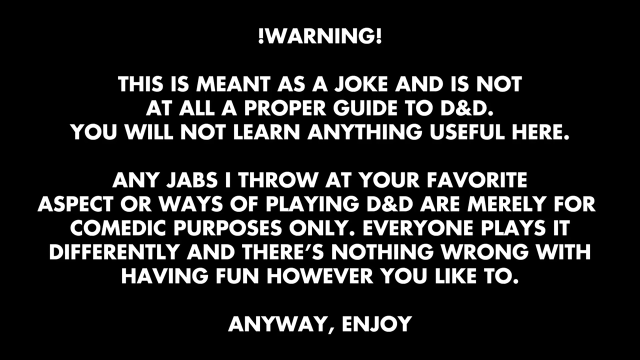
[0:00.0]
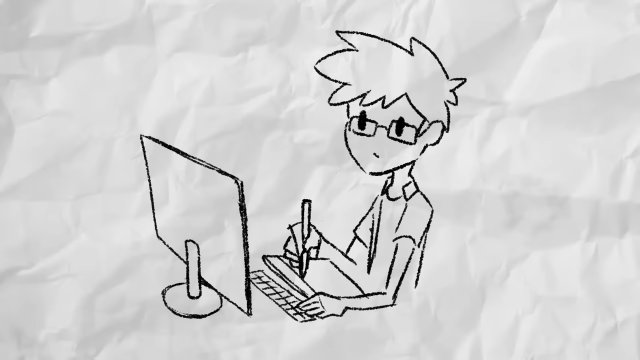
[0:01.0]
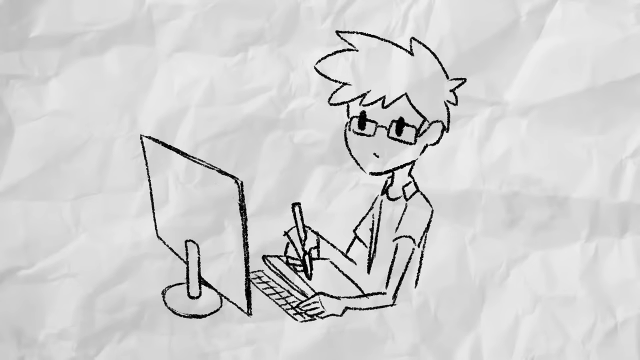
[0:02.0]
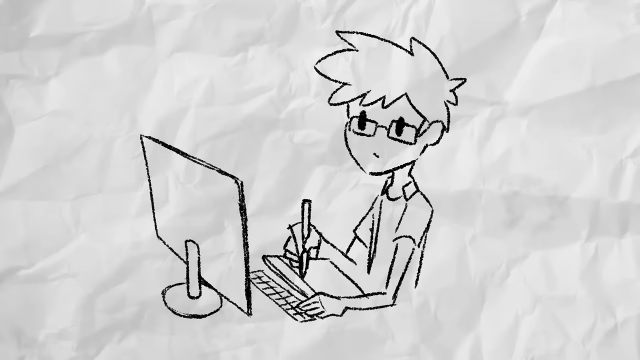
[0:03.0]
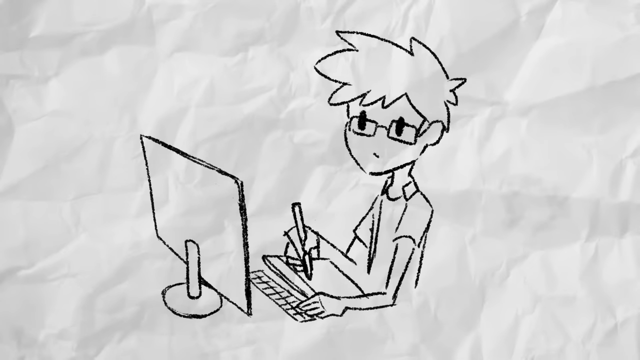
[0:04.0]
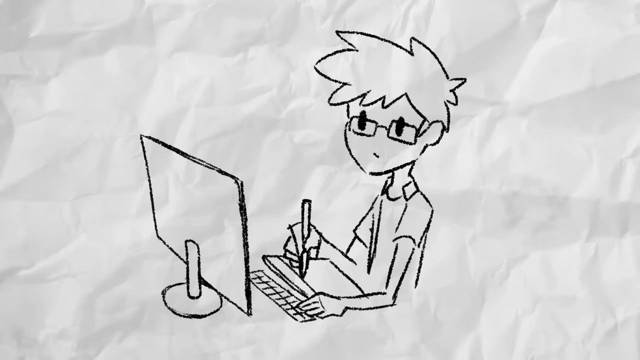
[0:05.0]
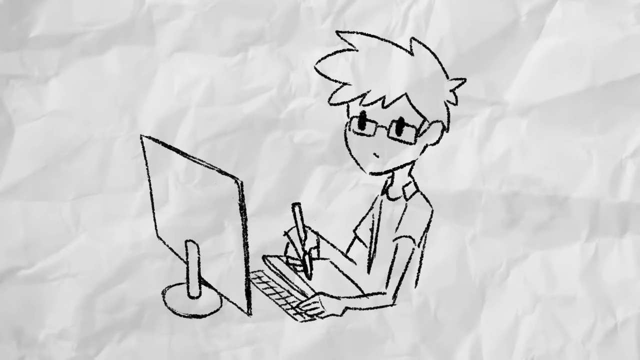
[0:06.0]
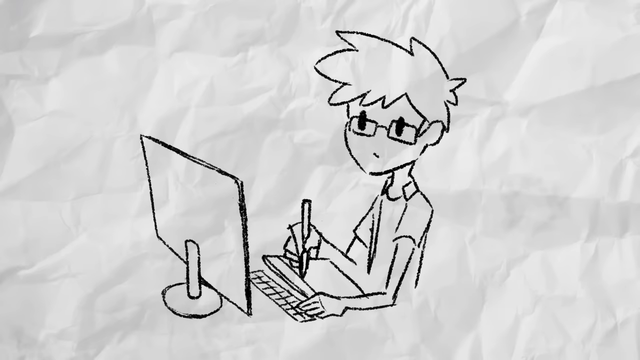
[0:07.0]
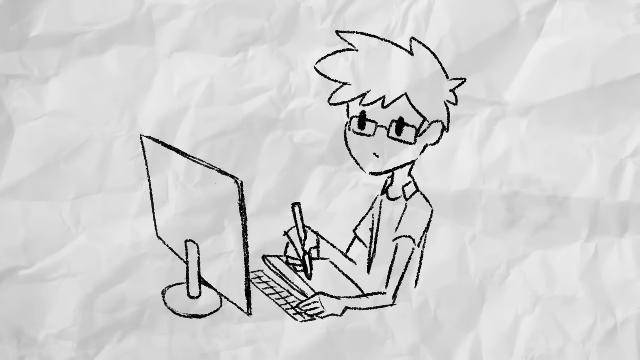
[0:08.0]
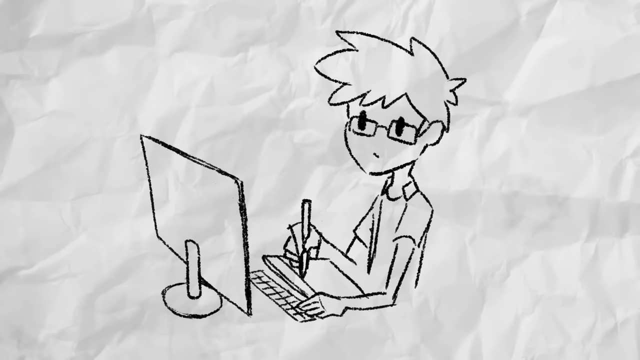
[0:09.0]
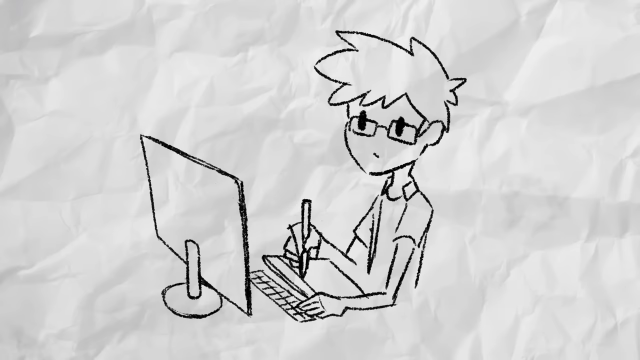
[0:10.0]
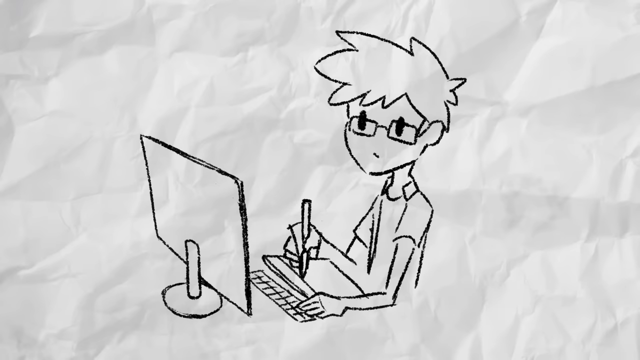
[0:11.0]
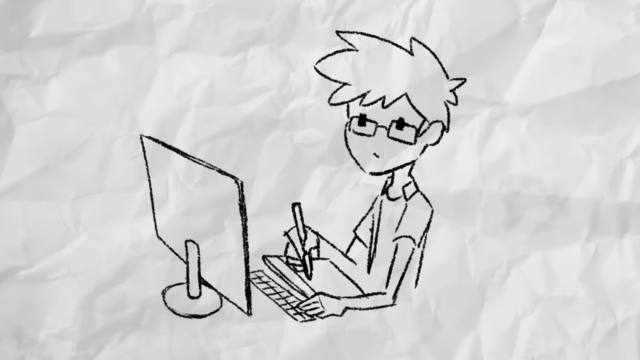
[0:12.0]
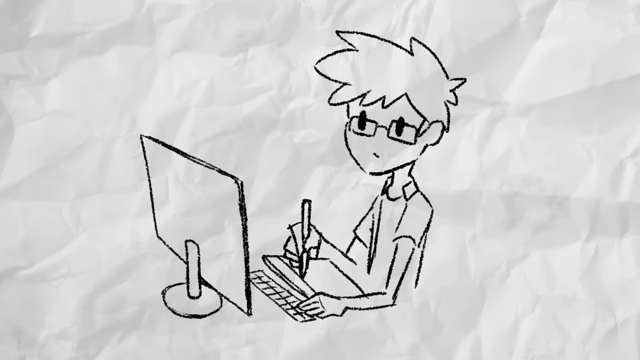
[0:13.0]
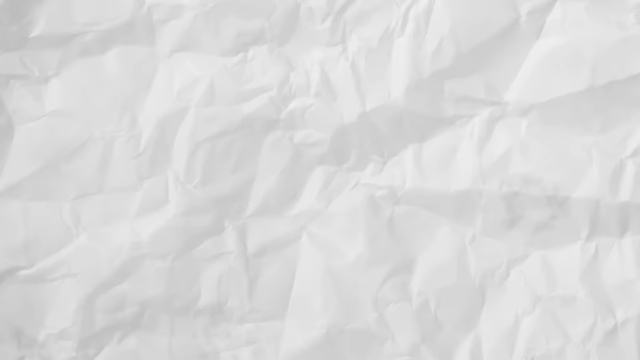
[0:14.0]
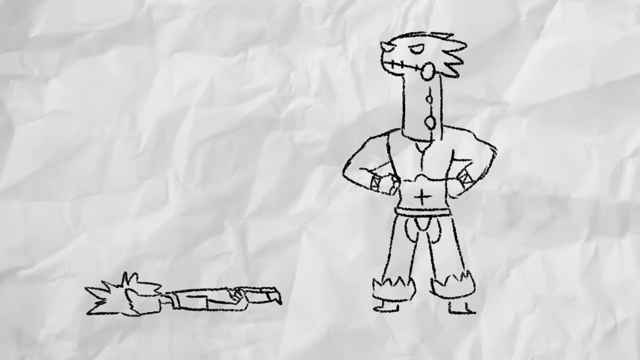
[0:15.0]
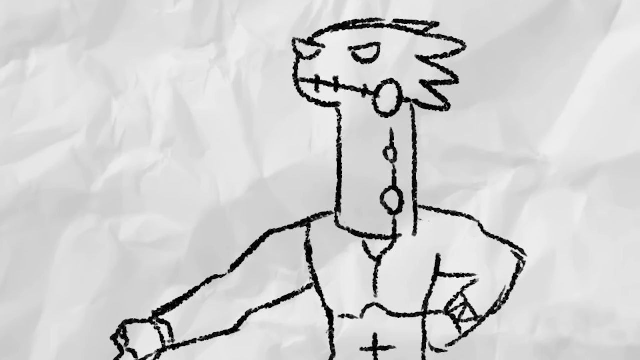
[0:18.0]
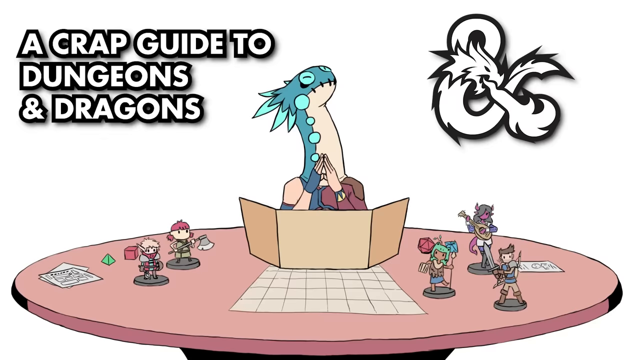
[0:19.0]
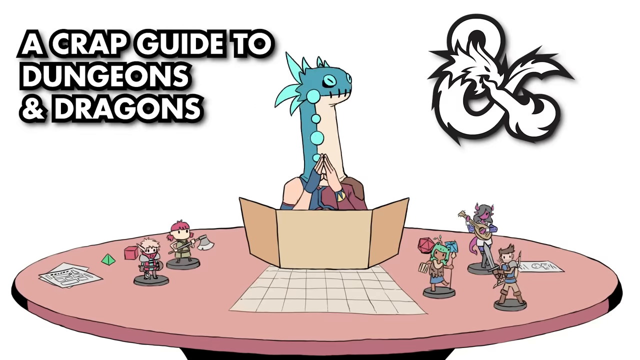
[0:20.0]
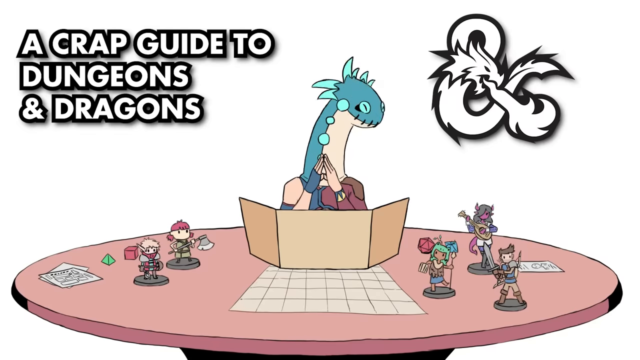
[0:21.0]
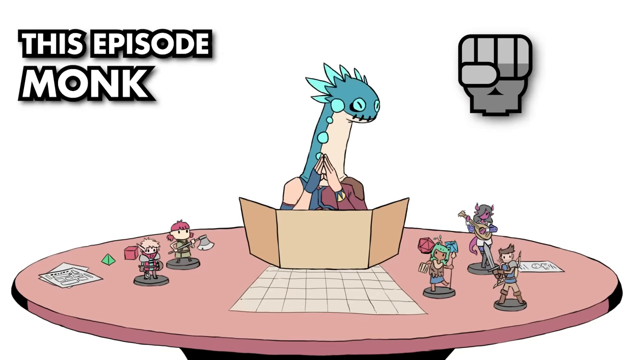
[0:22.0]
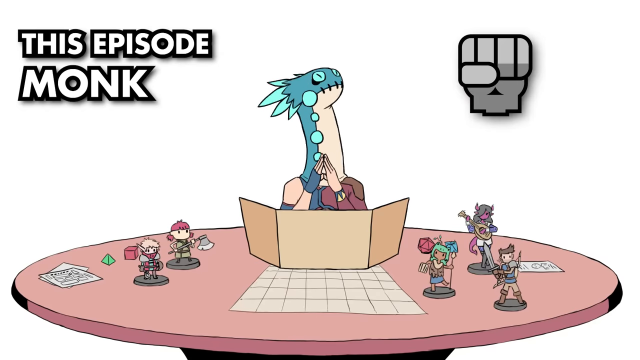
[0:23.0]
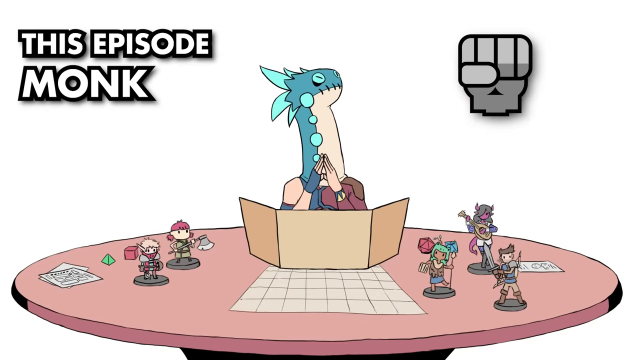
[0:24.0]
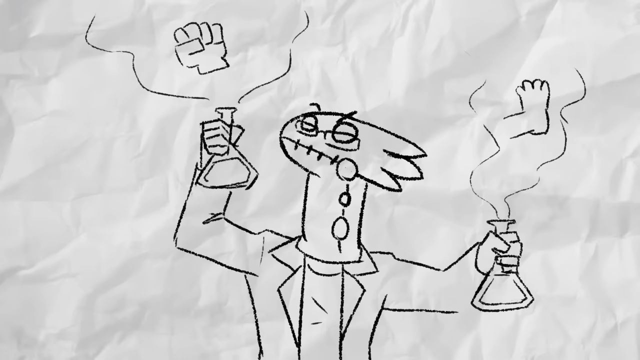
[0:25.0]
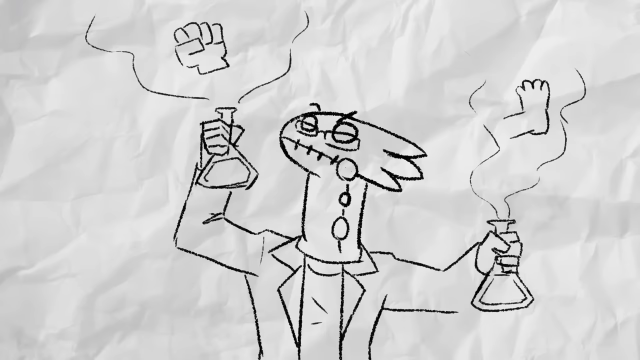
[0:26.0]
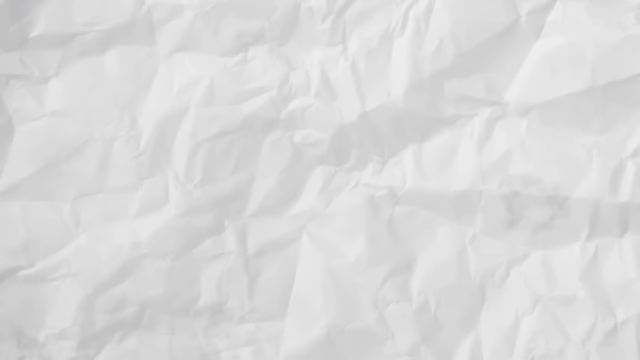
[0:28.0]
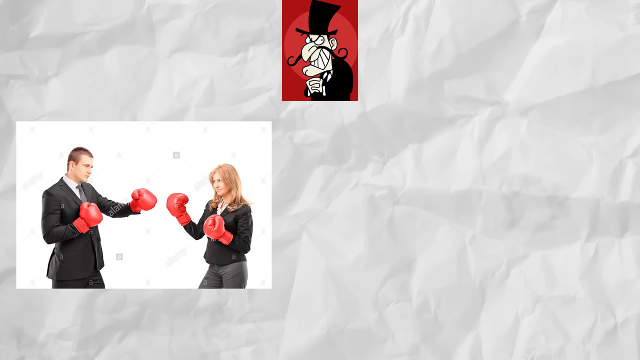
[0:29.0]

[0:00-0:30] The video starts with an all-black background. Across the top is "warning" with exclamation points on both sides. After a small gap, white text reads "This is meant as a joke and is not at all proper guide to D&D. You will not learn anything useful here." More text follows: "Any jabs I throw at your favorite aspect or ways of playing D&D are merely for comedic purposes," along with lines saying everyone plays it differently and there's nothing wrong with having fun, and ending with "Enjoy." Next comes a slightly animated sketch drawing on a background that looks like crinkled-up paper. There is a drawn laptop, its back visible on the left side. In front of it is a little sketched keyboard, just a line running diagonally down to the right with some lines across it, and there is a piece of paper. A boy with kind of shaggy hair on top and glasses, drawn in black and white, wears a short-sleeved shirt. One hand holds a pencil, and his left hand rests on the desk as he pretends to write, though nothing actually appears on the paper. He stops, blinks, and starts writing again, still with nothing going down. He taps the keyboard with his left hand, writes more, and blinks more. Then a drawing appears of kind of a lizard man with a long neck, facing to the left with his hands on his hips. He is shirtless, with pants down to his ankles and kind of flames at the bottom. The other person's body now lies flat, face down, on the left side. The creature points down at him, and the view zooms in on his head.